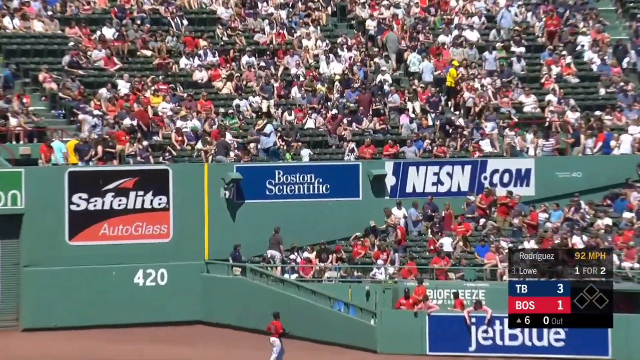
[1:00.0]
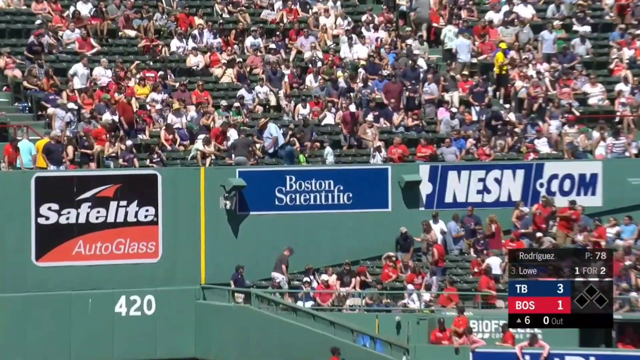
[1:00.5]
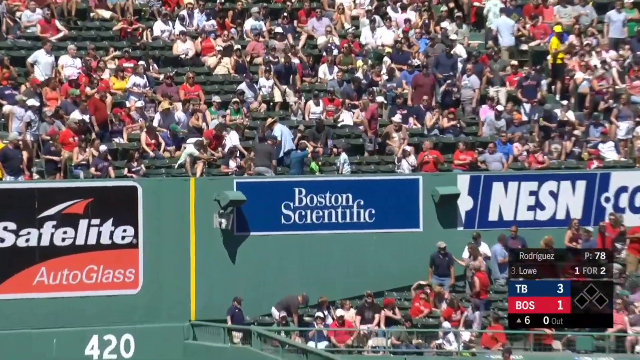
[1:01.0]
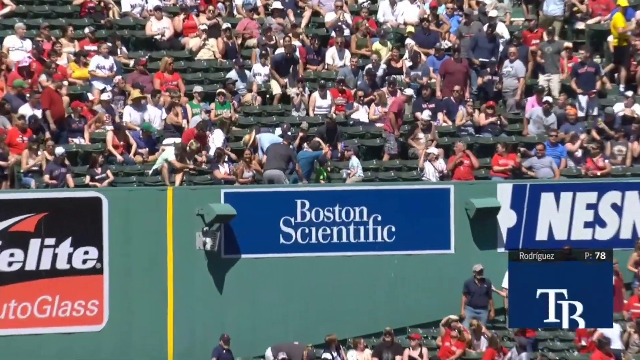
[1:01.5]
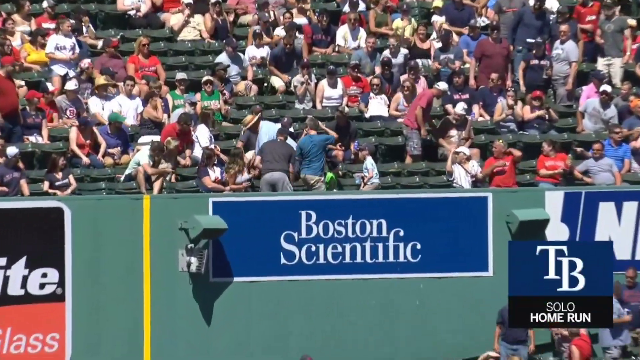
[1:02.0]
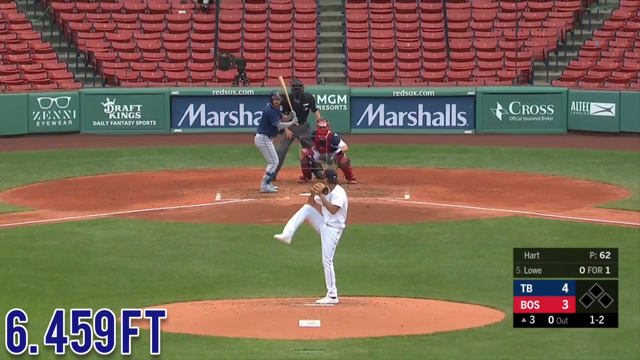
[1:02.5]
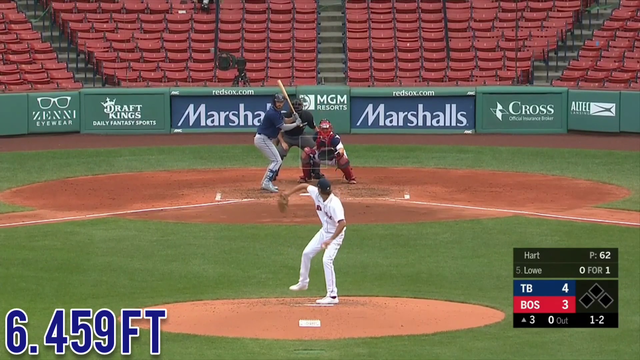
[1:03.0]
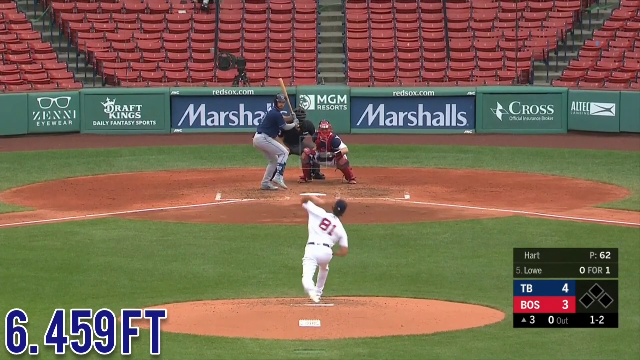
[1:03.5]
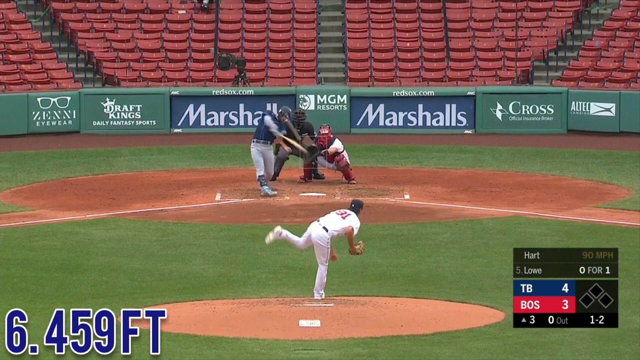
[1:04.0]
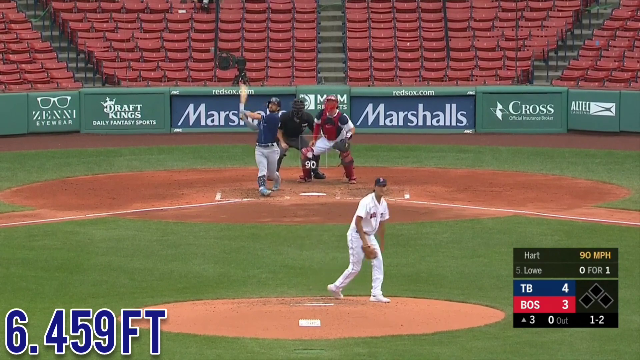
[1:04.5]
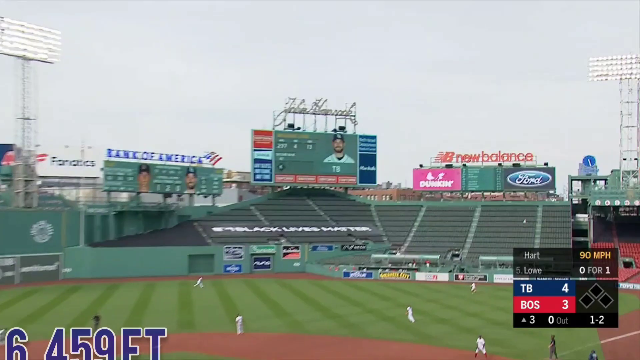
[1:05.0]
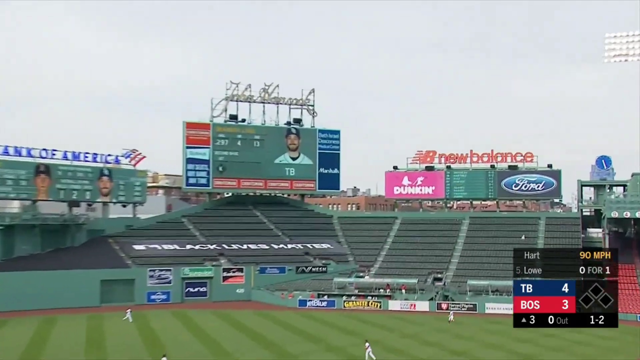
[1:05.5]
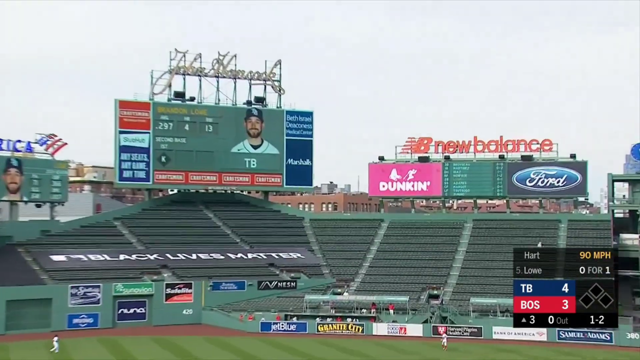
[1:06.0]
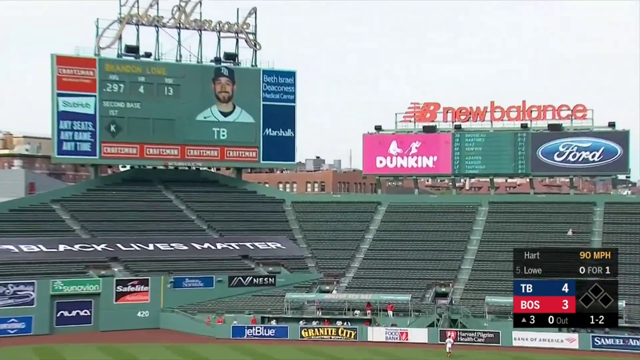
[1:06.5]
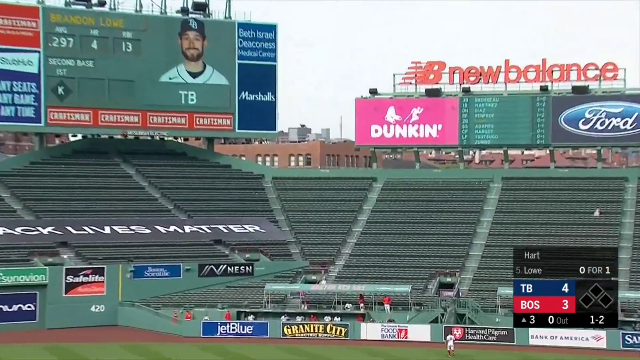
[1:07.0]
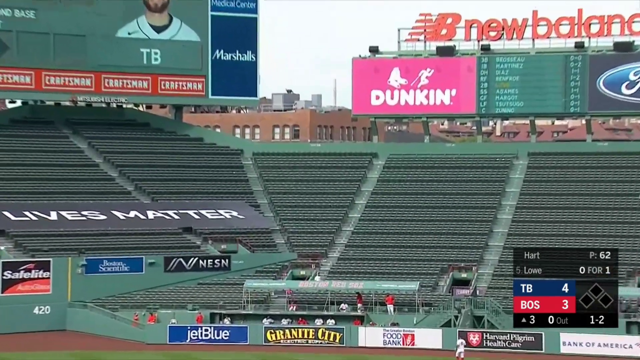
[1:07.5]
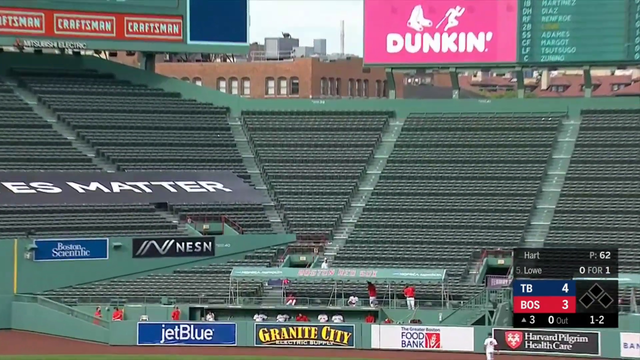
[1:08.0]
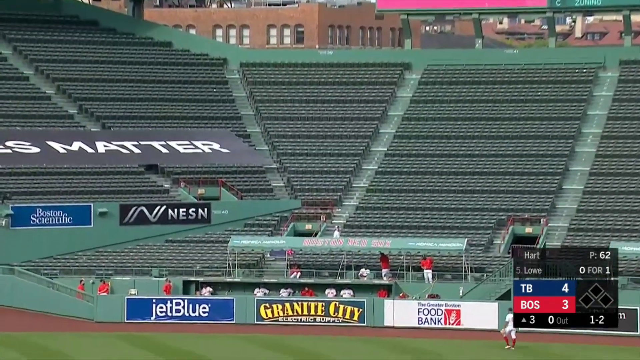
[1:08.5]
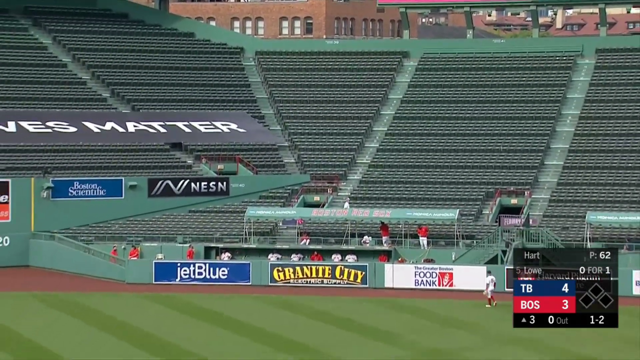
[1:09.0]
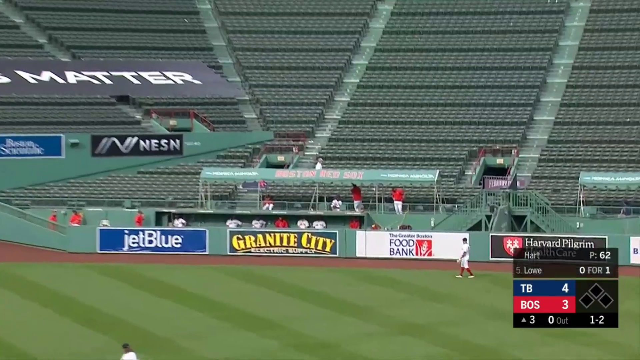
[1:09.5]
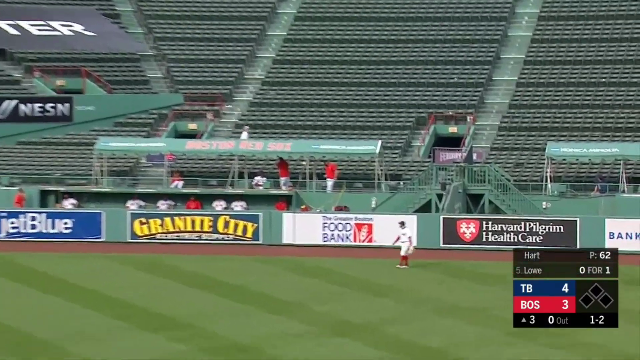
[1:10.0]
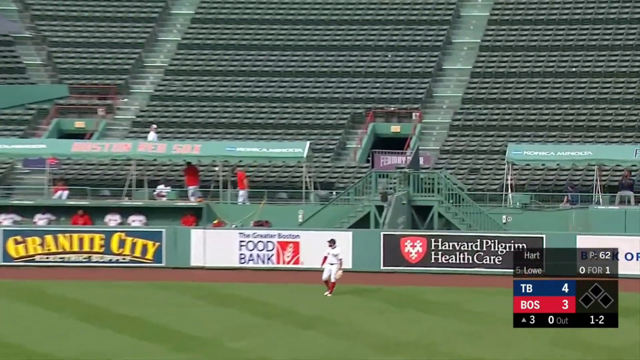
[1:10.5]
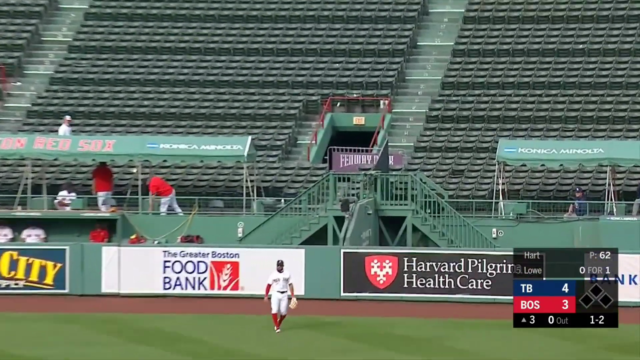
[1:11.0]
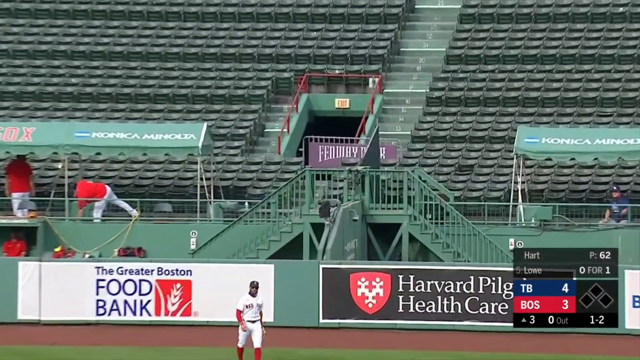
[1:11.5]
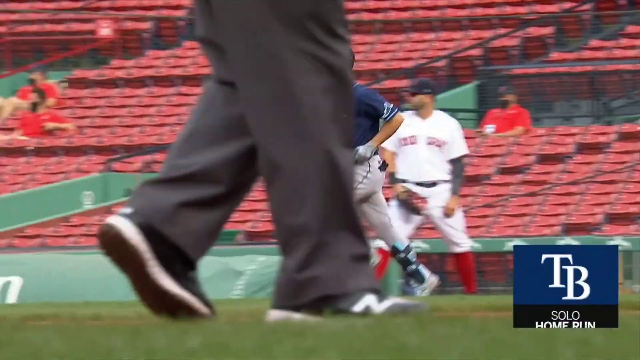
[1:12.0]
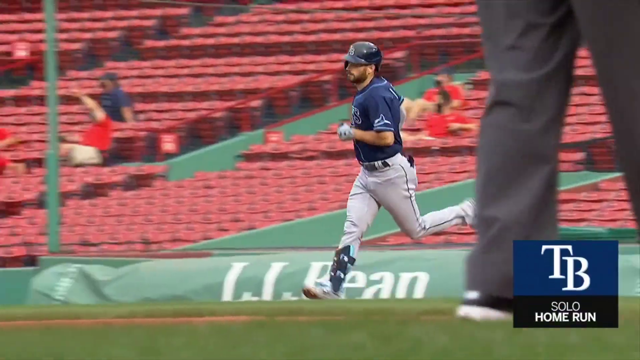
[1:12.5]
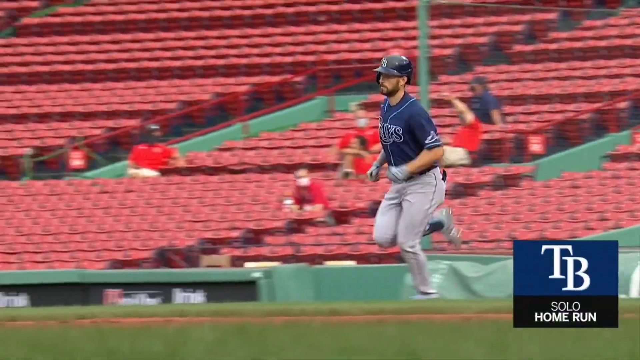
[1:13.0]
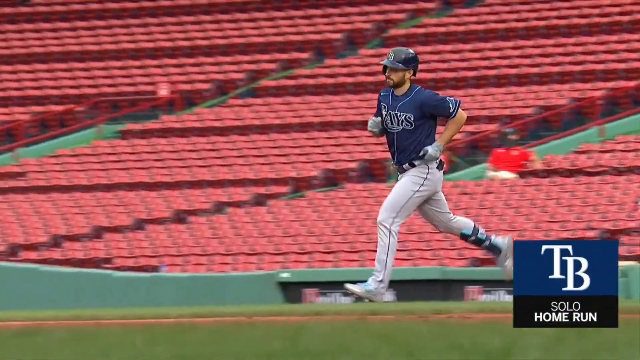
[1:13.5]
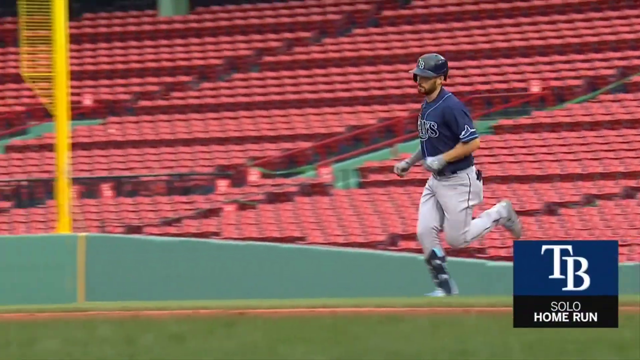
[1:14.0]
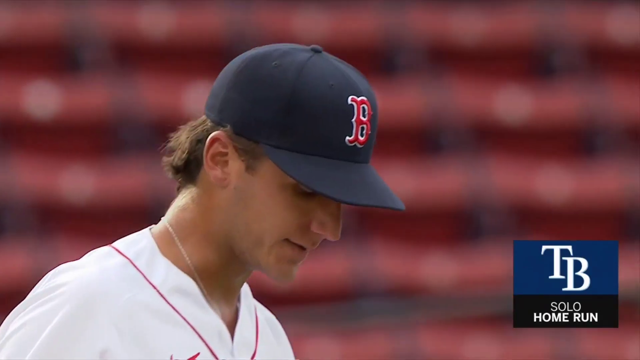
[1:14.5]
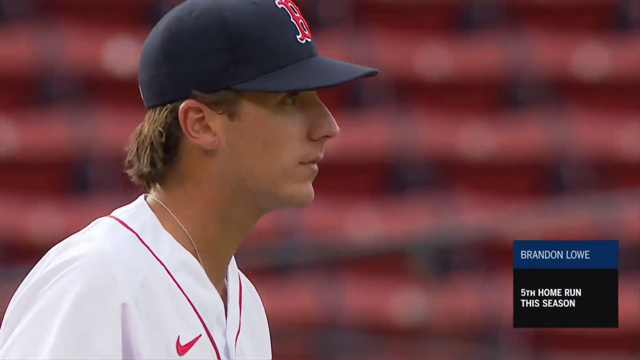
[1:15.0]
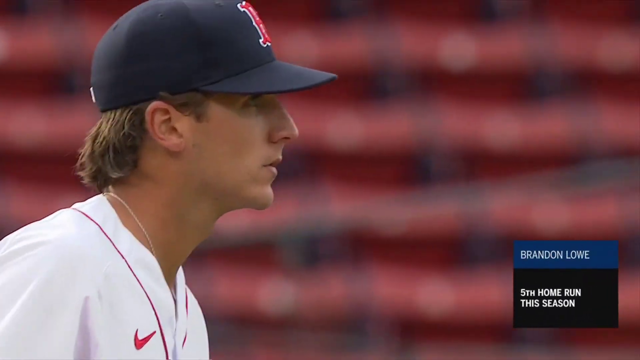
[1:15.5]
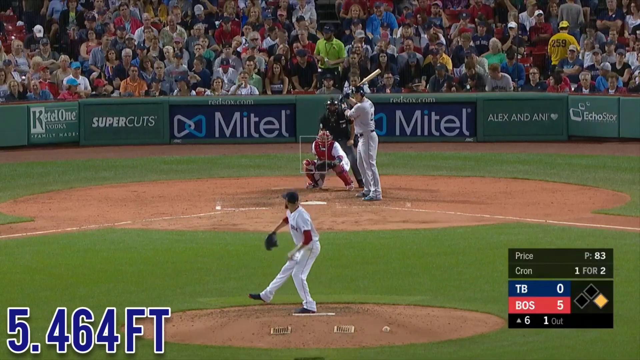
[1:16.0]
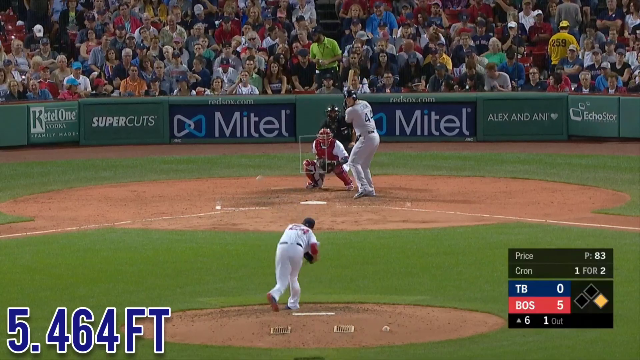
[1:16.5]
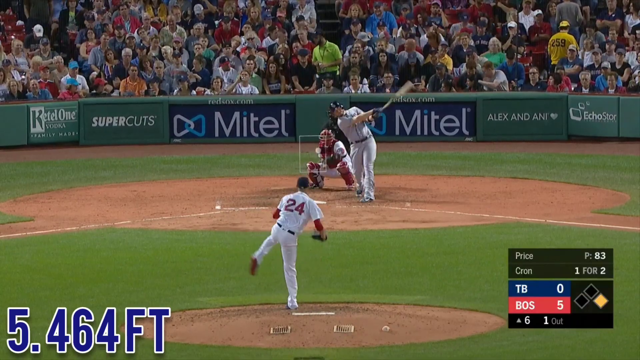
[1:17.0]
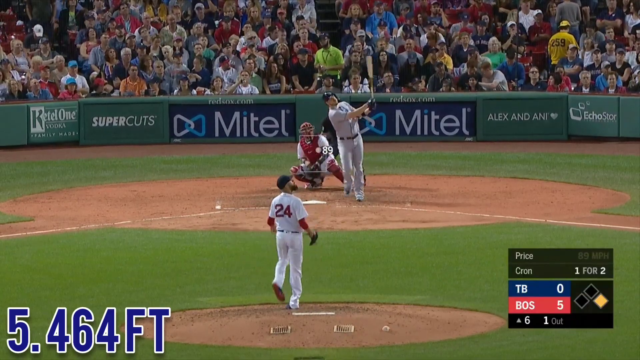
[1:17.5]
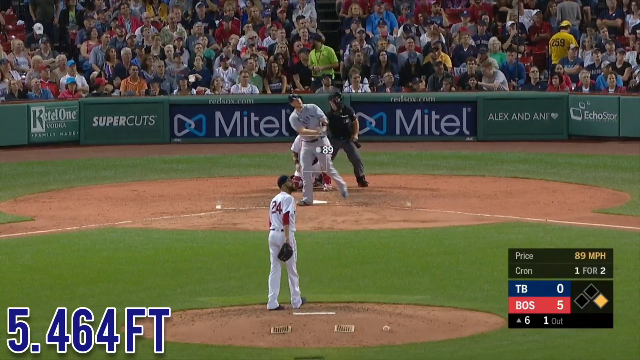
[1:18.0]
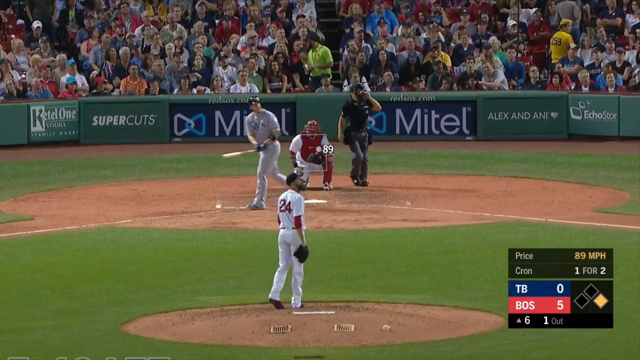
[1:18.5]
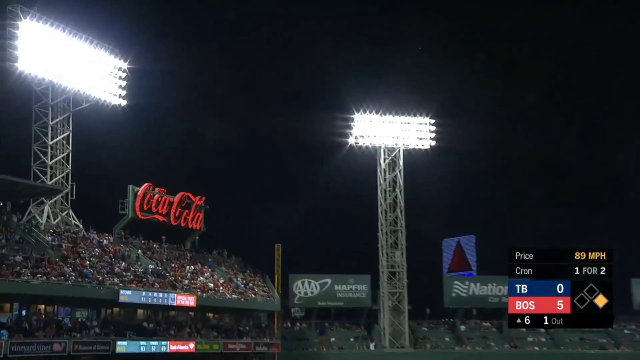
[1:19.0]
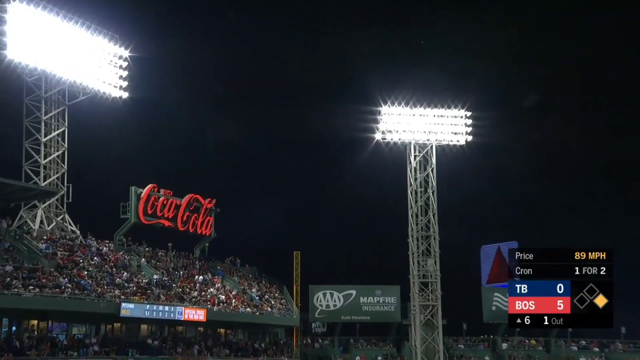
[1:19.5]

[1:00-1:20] The Tampa Bay home run goes over the 420-foot sign in dead center field at Fenway Park, right over the blue and white Boston Scientific sign. The scene then changes, still in Boston with the Red Sox playing Tampa Bay; the score is 4-3 Tampa Bay in the top of the third. Red Sox pitcher Hart delivers a left-handed pitch, his 63rd of the game, and the Tampa Bay batter pulverizes it into left center above the Granite City sign for a solo home run. The scene changes again to Tampa Bay at Boston in the top of the sixth, with Boston leading 5-0. The Boston pitcher throws an 89 mph fastball, and the right-handed Tampa Bay batter hits it hard and high into left center, where it falls for a home run.